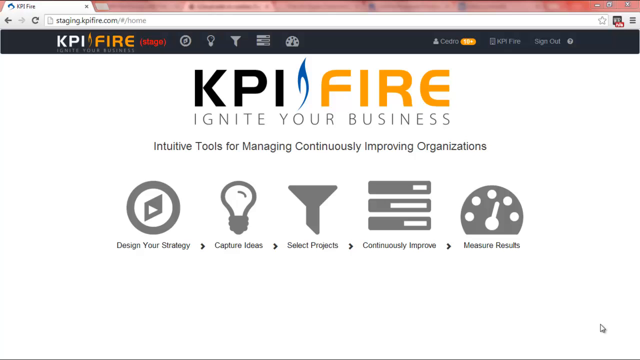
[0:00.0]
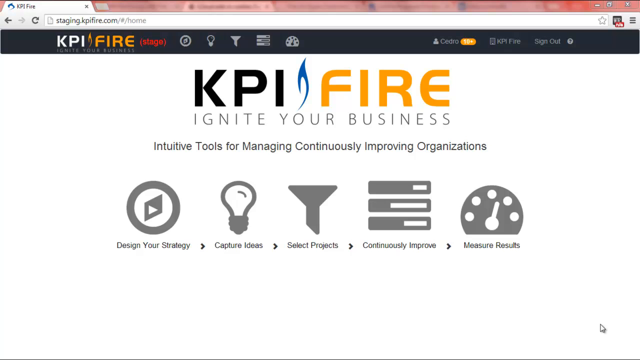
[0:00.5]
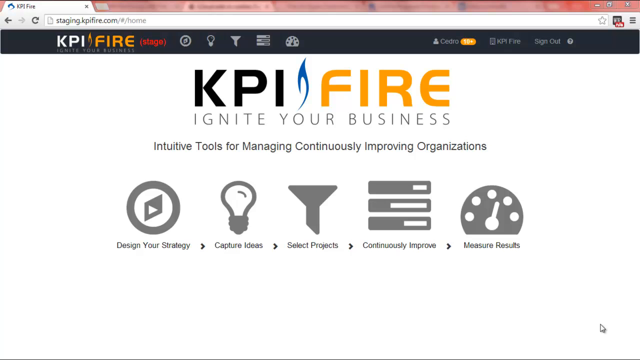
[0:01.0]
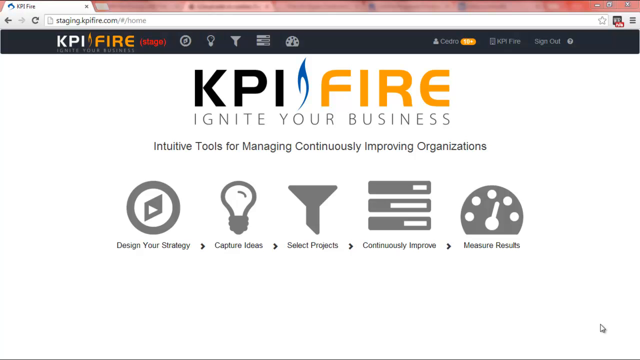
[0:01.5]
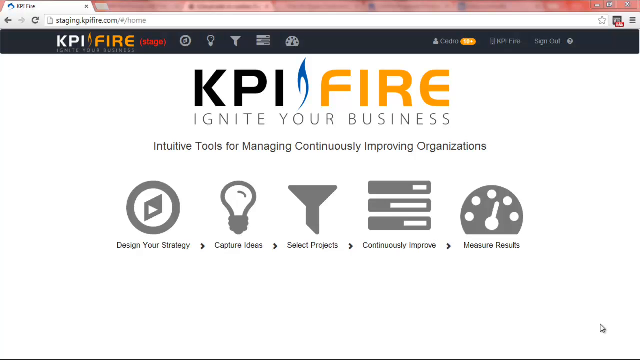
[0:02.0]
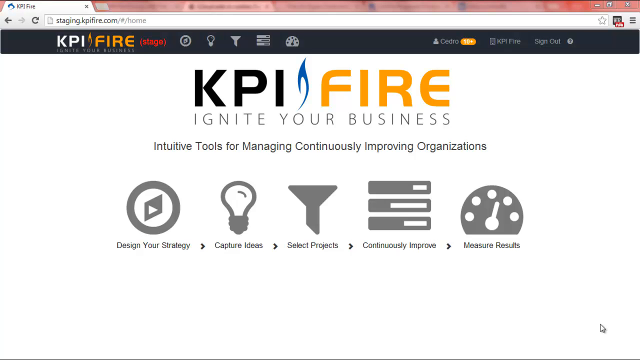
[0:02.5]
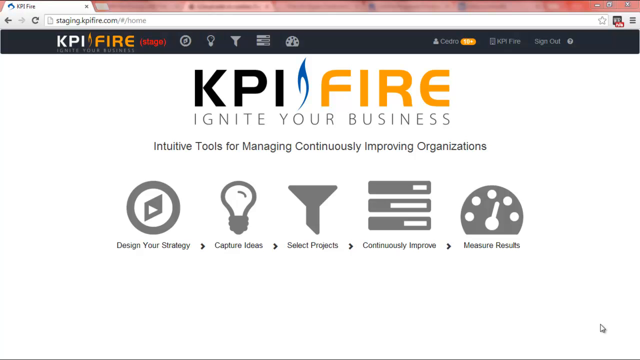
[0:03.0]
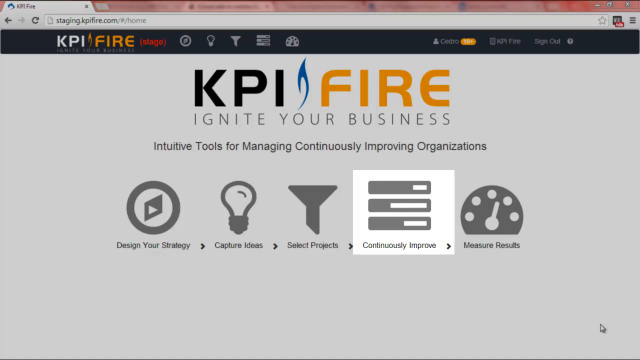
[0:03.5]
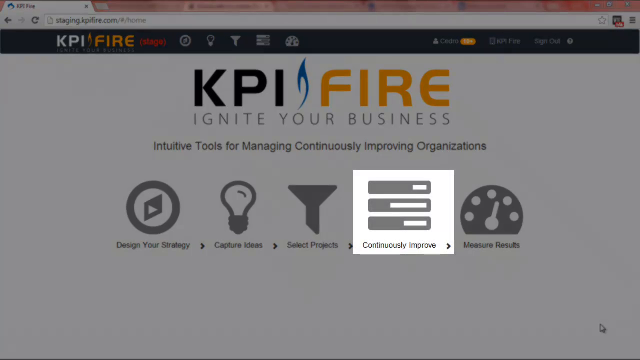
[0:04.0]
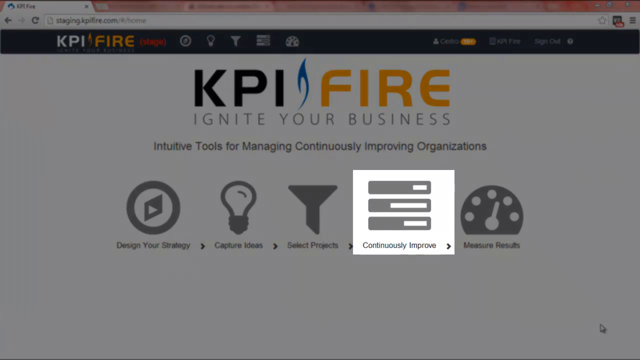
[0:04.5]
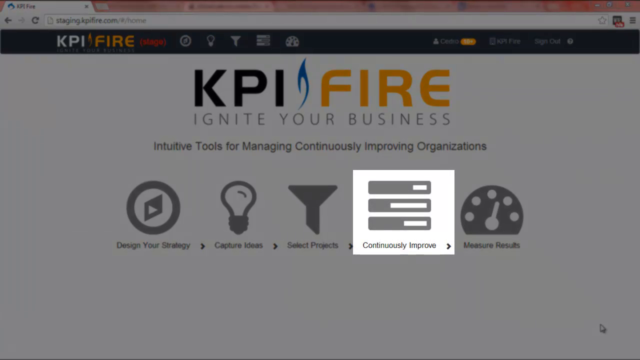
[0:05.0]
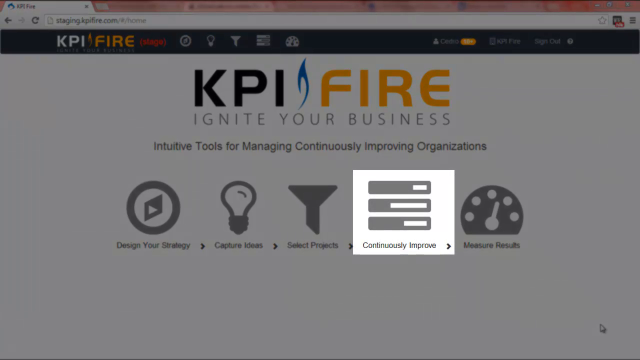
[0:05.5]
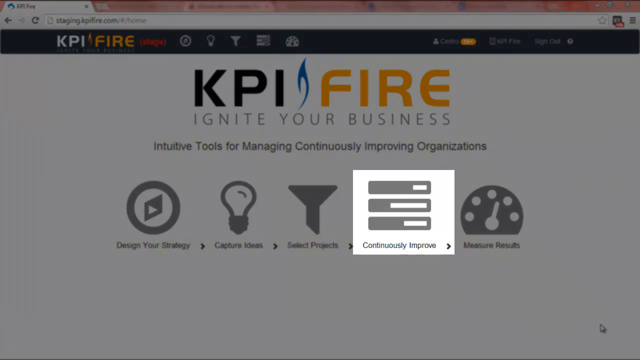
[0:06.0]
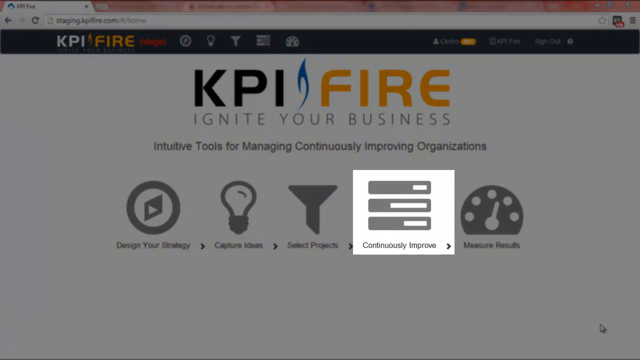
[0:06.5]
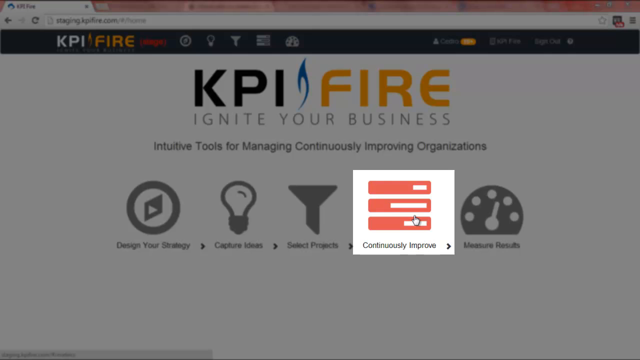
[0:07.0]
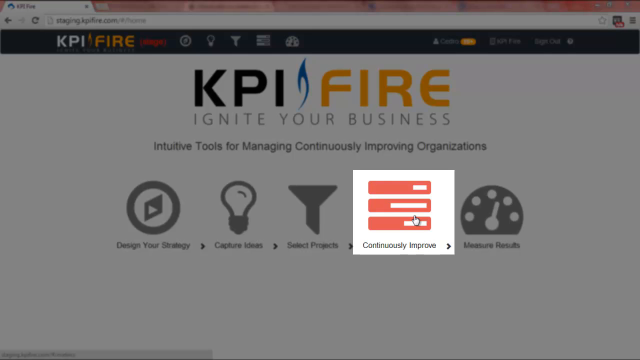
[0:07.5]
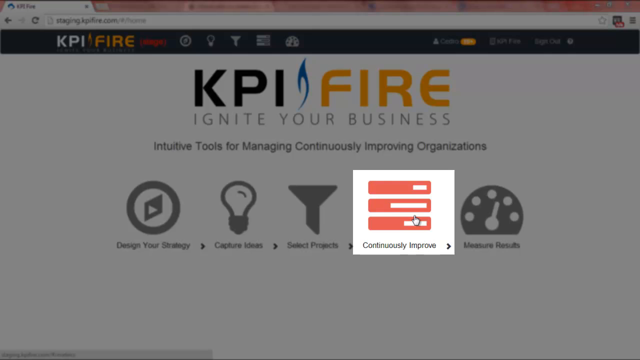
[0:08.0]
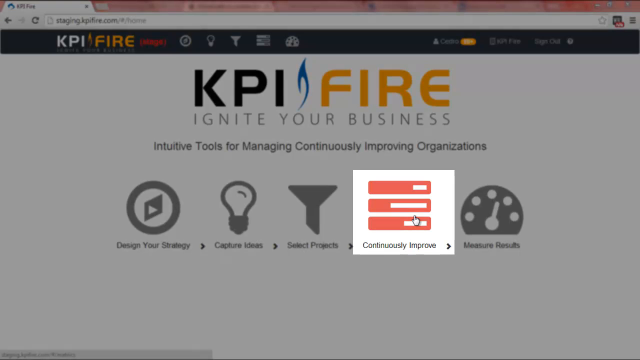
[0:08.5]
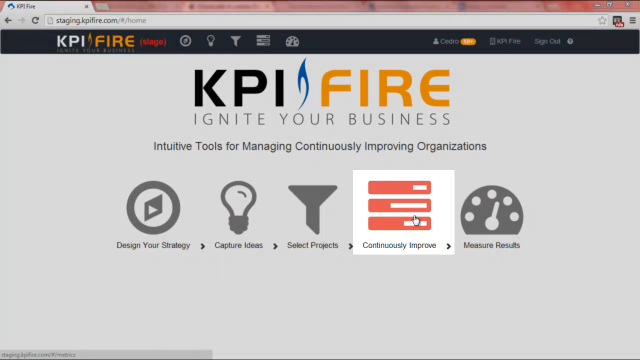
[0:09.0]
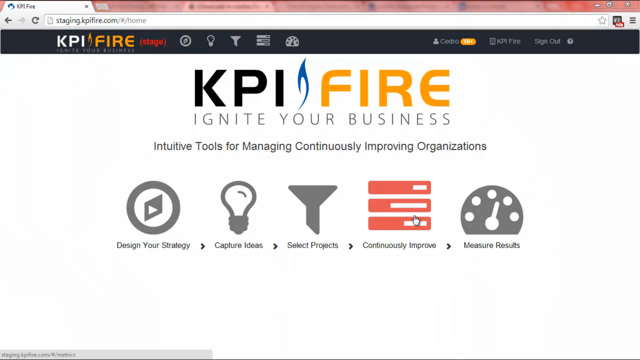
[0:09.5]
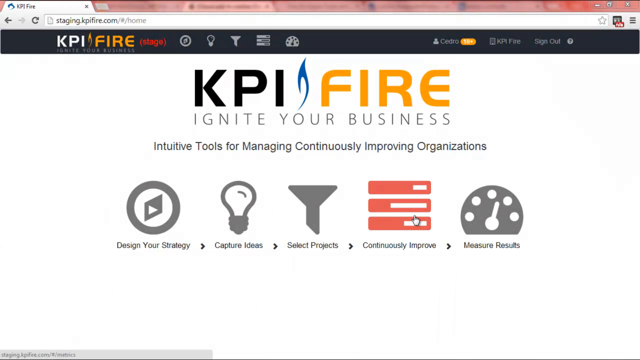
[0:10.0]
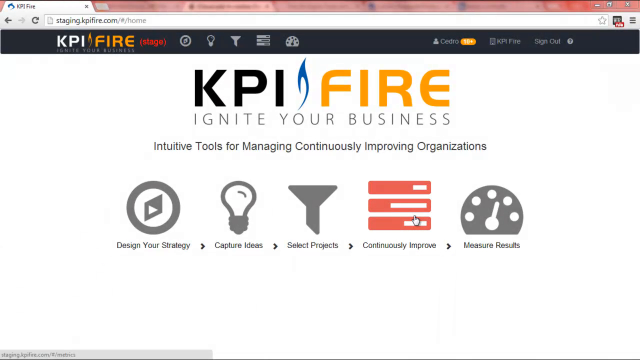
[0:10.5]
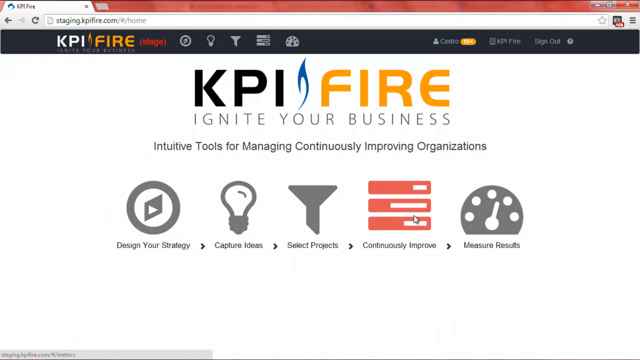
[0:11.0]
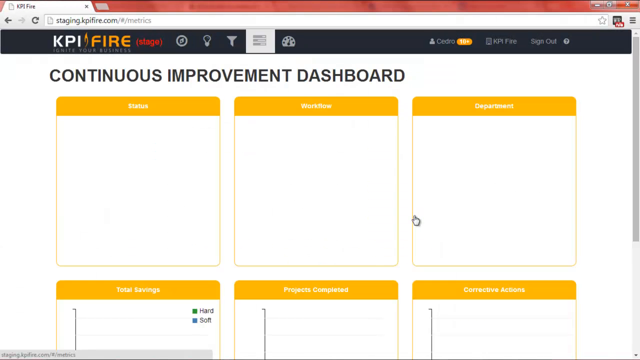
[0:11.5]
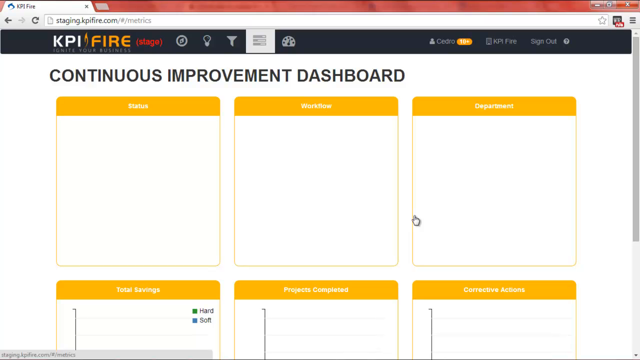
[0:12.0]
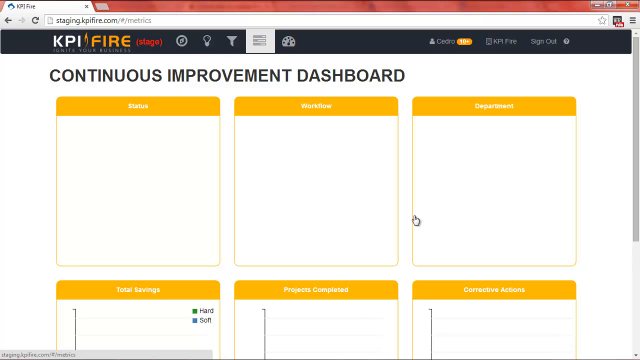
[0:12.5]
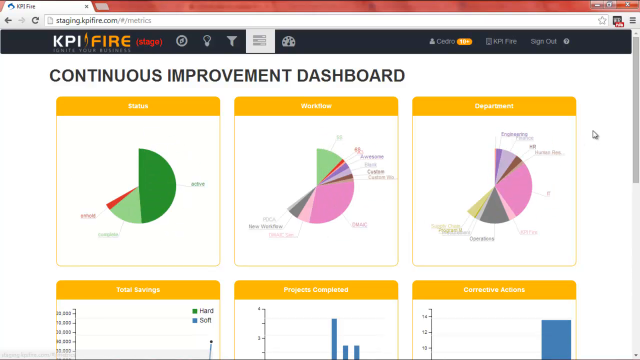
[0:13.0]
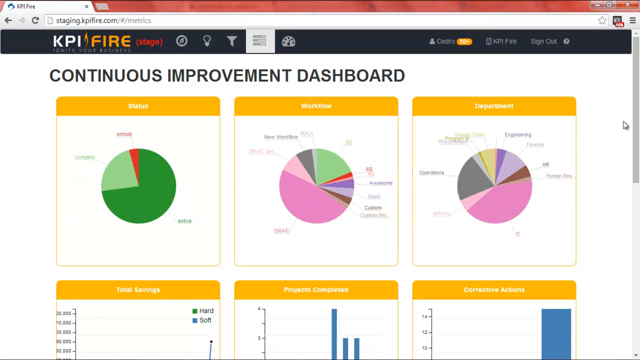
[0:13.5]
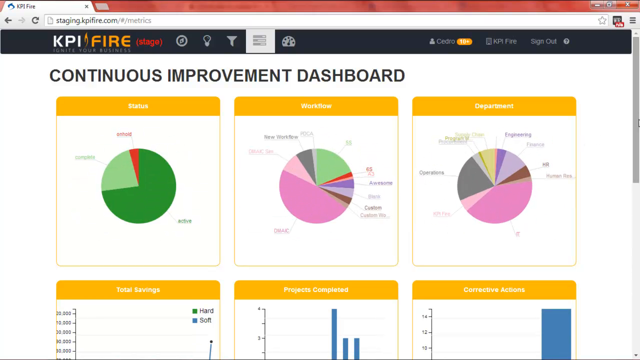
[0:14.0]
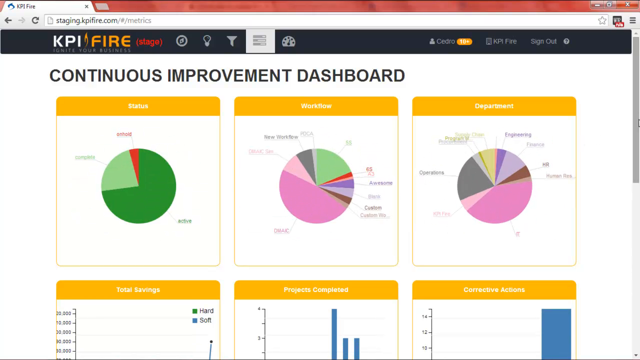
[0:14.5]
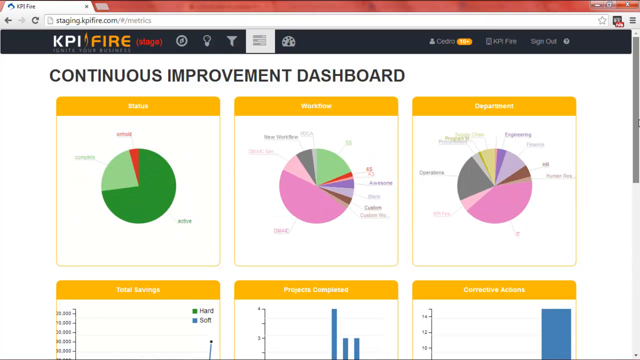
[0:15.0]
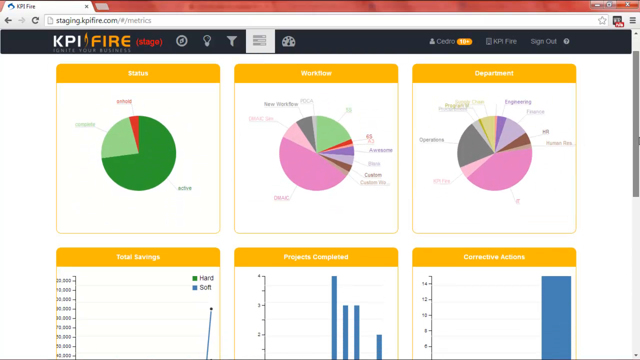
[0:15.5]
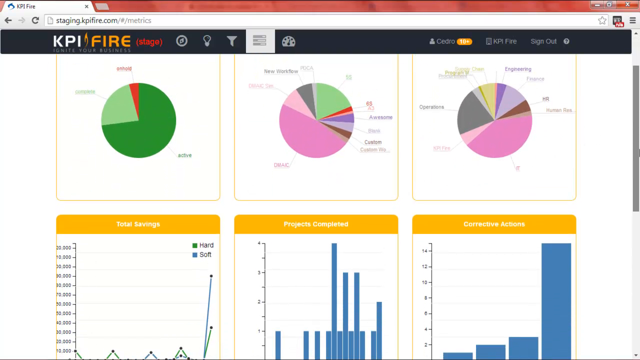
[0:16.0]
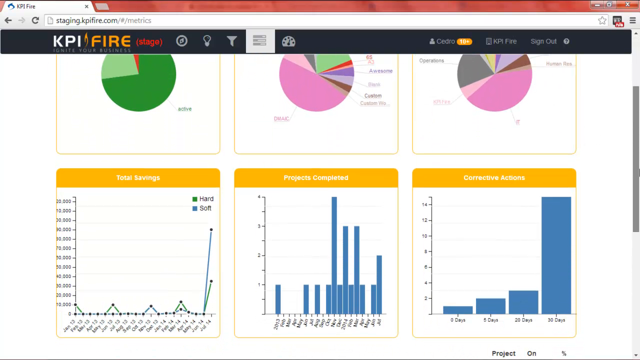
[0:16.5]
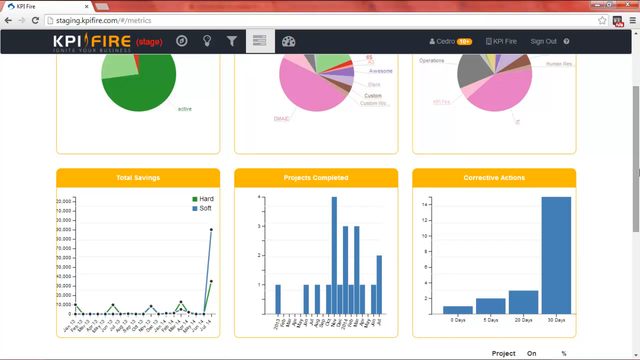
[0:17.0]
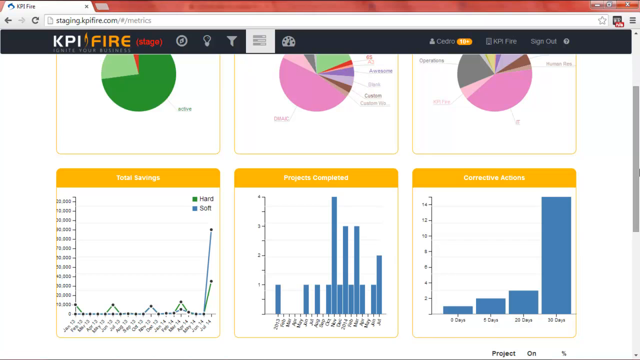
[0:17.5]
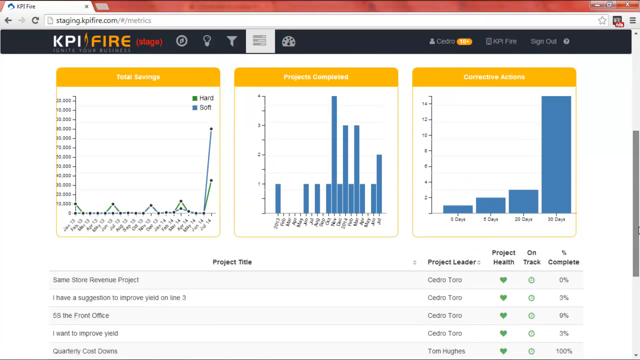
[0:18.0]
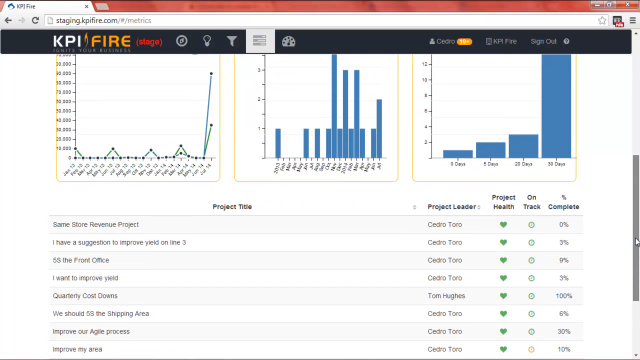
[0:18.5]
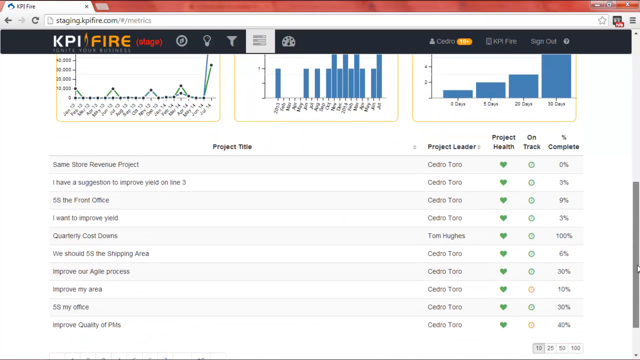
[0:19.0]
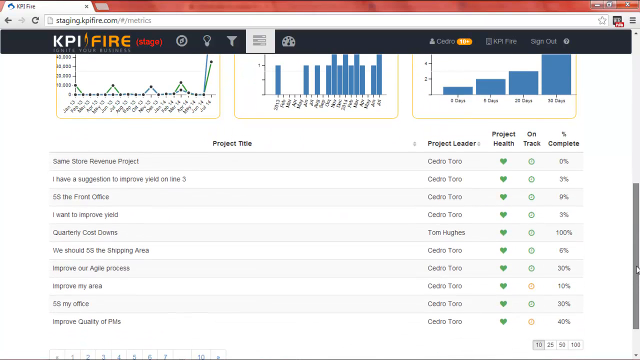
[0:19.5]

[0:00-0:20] A web page opens with the KPI FIRE Ignite Your Business logo in the middle. Right below it is a plan with five symbols: design your strategy, capture ideas, select projects, continuously improve, and measure results. The screen then dims slightly black, leaving a square around the continuously improve symbol in its normal color so that it stands out. The mouse clicks the continuously improve symbol, which turns from light gray to red; the dark overlay on the rest of the screen fades away and the page returns to normal, with the symbol still red. The page then goes to another screen showing a continuous improvement dashboard, with three pie charts and three graphs underneath. The pie charts are for status, workflow, and department. Scrolling down reveals the three graphs, which are total savings, projects completed, and corrective actions, along with project titles and sections below them.